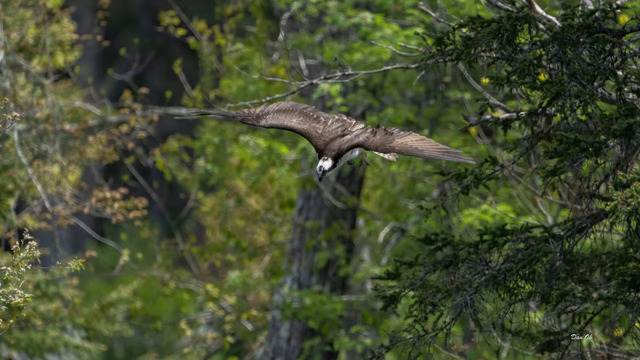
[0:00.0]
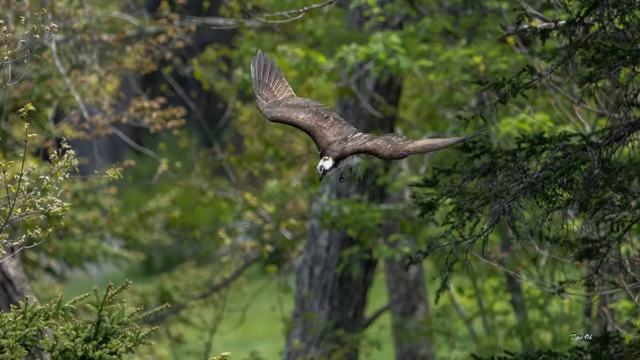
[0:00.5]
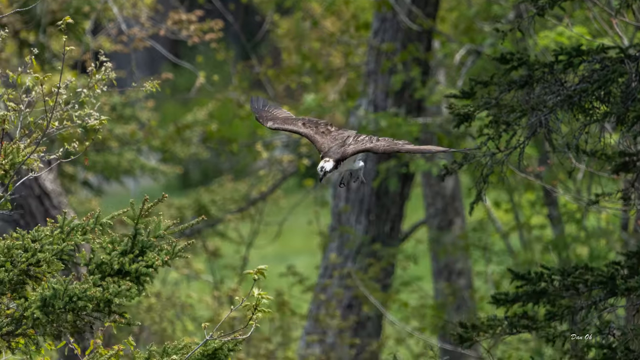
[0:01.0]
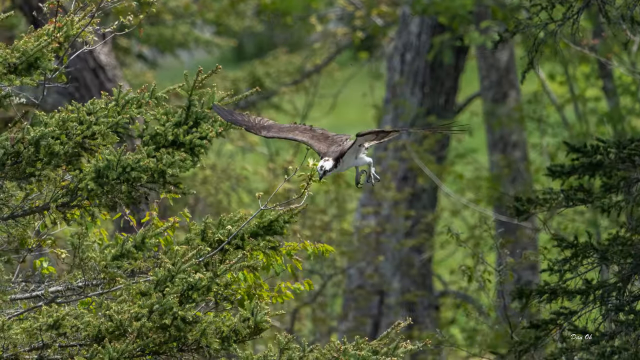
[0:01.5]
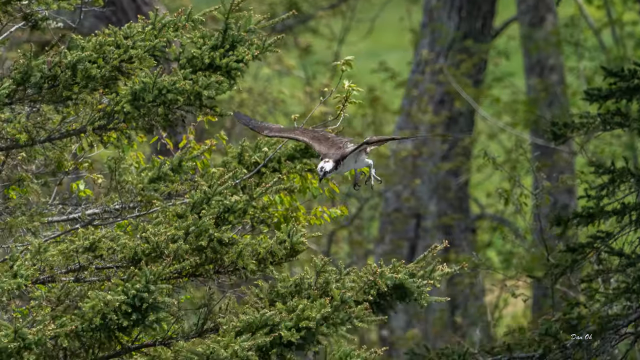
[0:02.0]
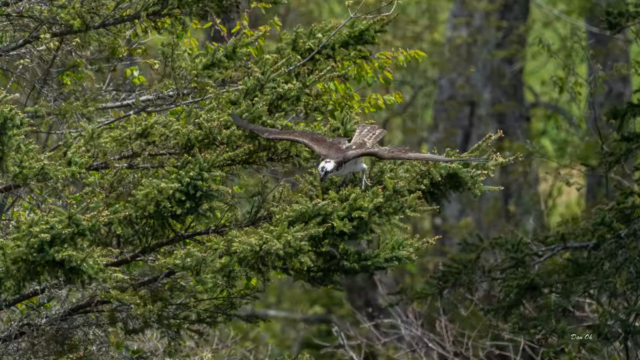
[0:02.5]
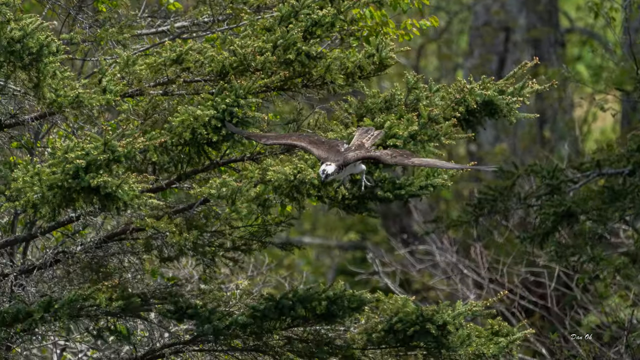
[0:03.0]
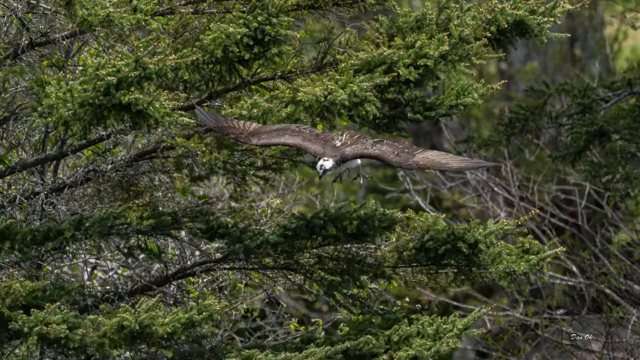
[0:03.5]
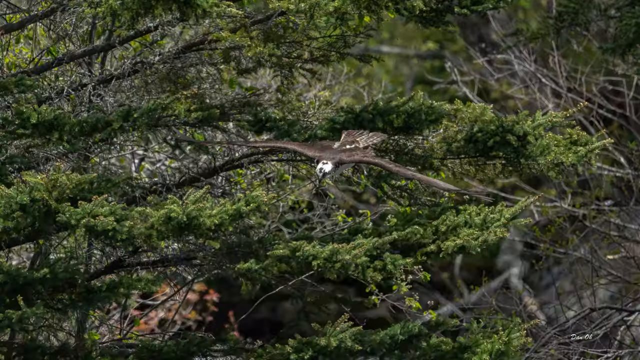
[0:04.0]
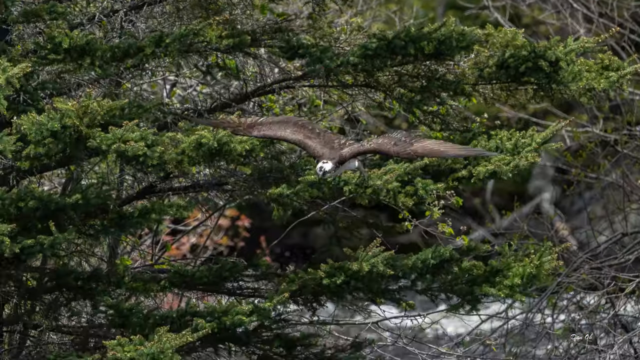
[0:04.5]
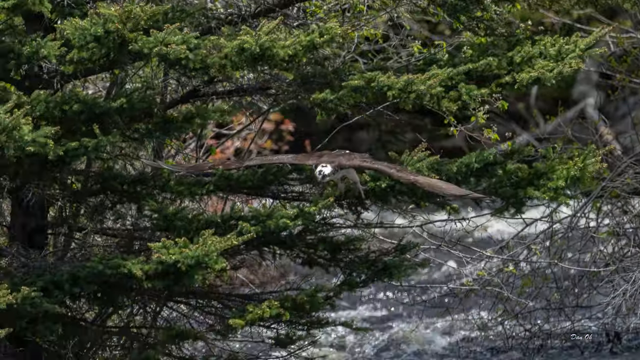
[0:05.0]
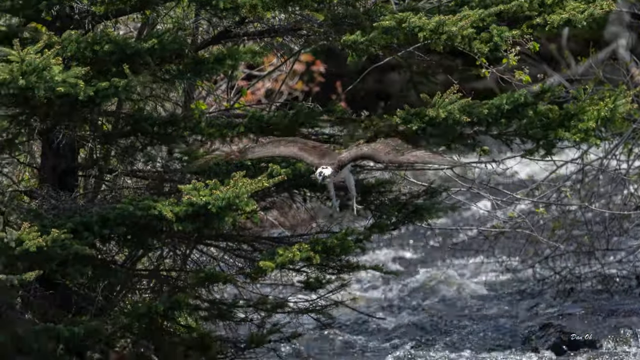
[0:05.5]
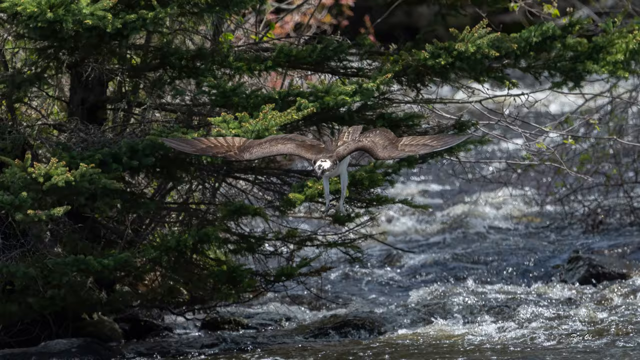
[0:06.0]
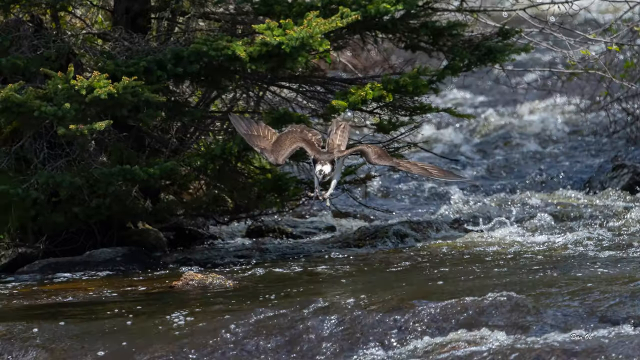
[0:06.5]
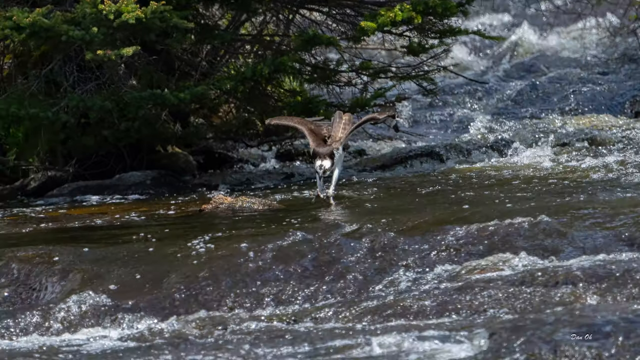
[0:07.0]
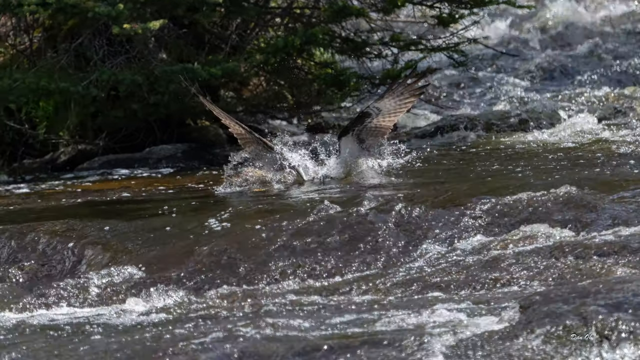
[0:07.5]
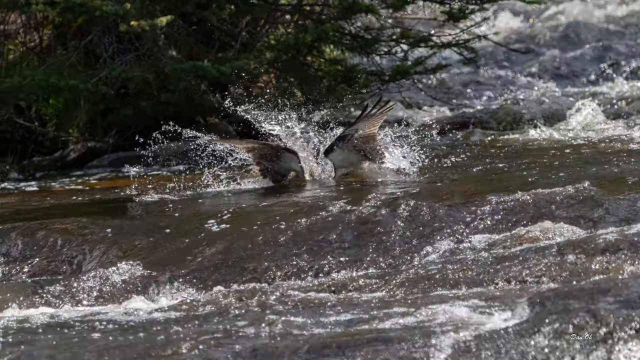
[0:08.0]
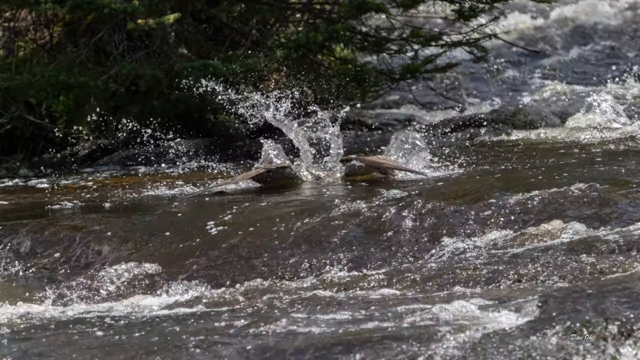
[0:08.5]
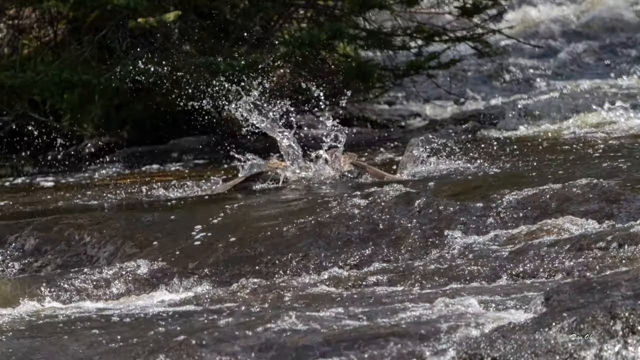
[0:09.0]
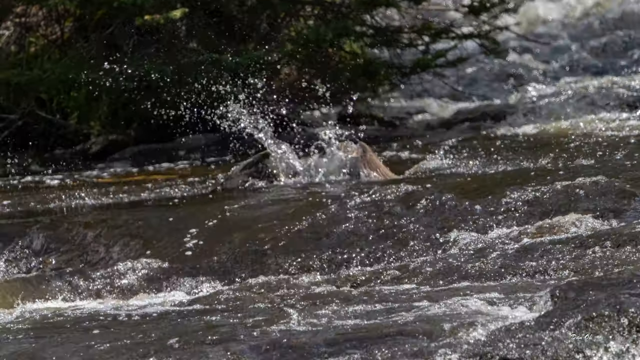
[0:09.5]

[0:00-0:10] An eagle flies downward in a very choppy way because the video has a very low frame rate. Rather than moving smoothly, the eagle looks like it is skipping frames or glitching, moving and then stopping and then moving and stopping again, almost like a PowerPoint.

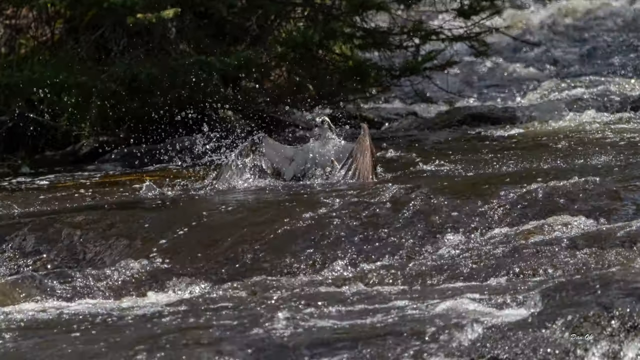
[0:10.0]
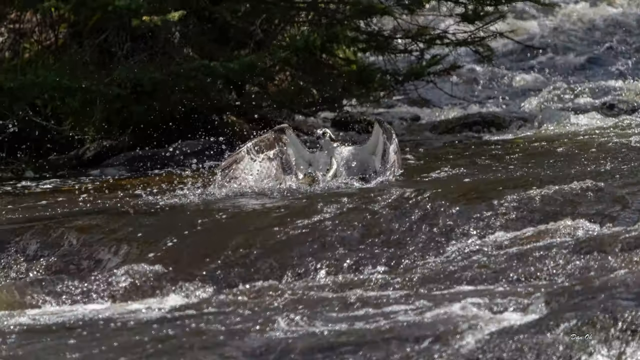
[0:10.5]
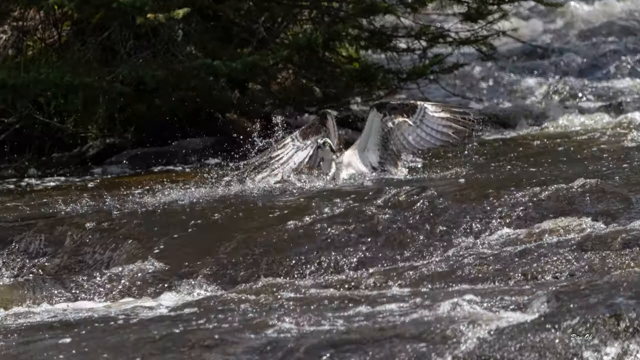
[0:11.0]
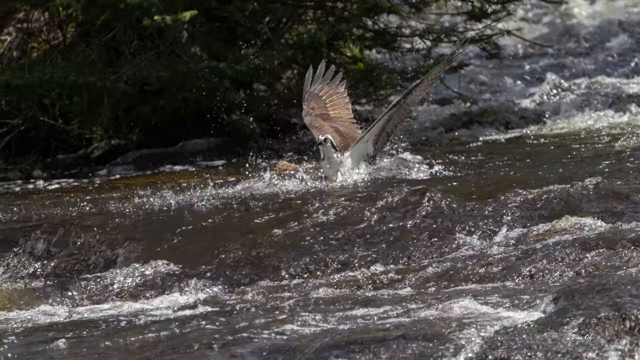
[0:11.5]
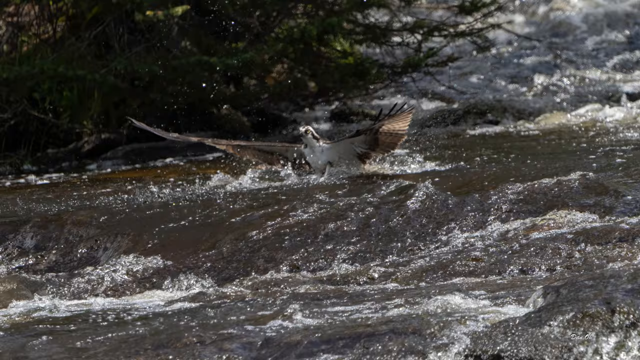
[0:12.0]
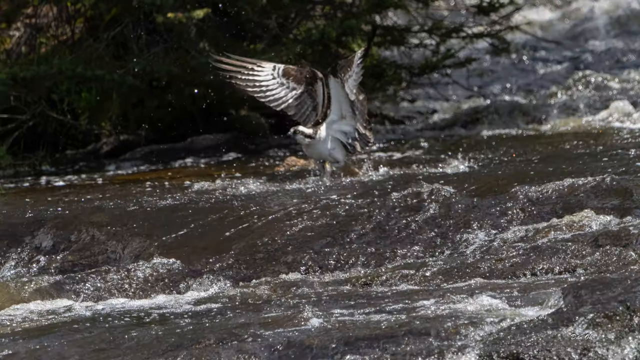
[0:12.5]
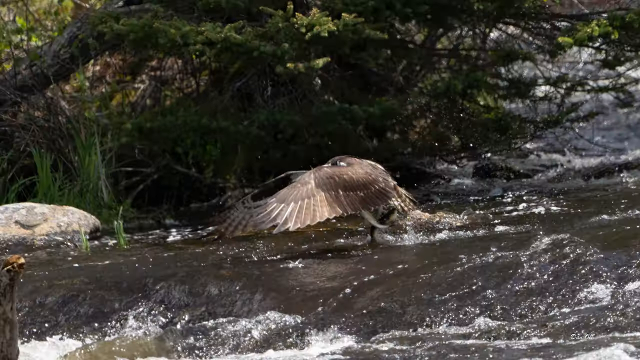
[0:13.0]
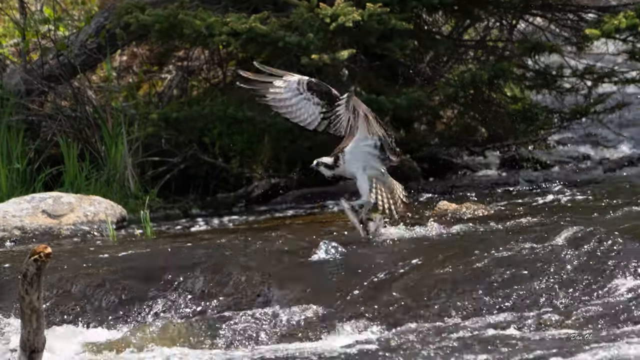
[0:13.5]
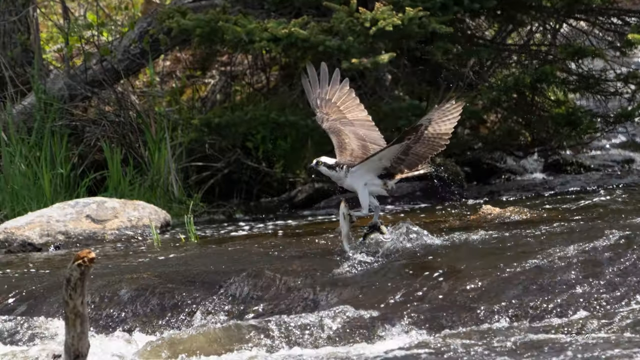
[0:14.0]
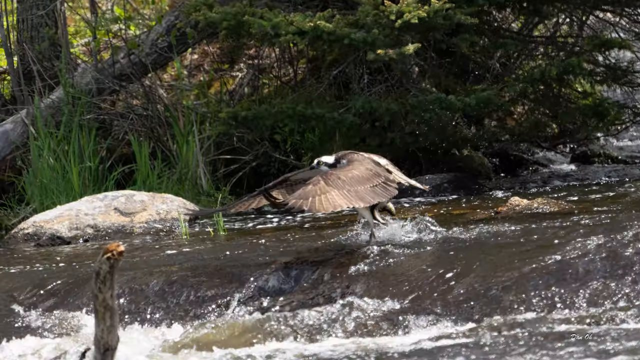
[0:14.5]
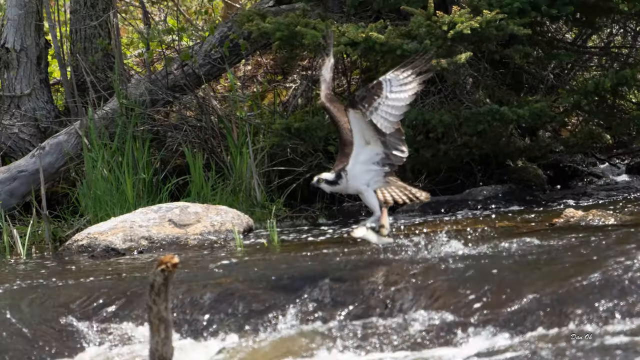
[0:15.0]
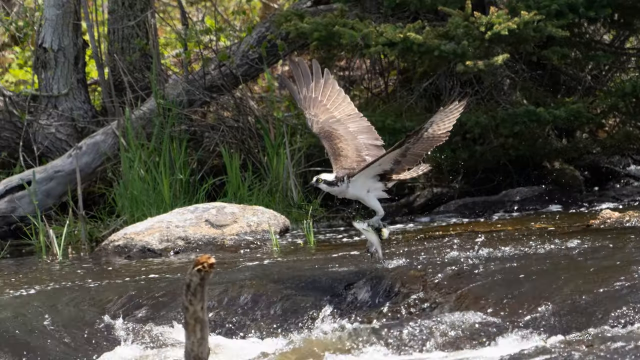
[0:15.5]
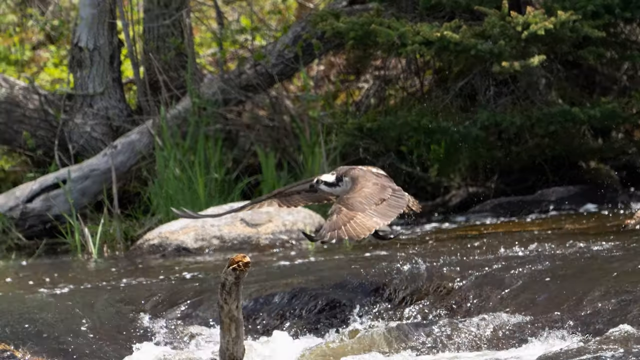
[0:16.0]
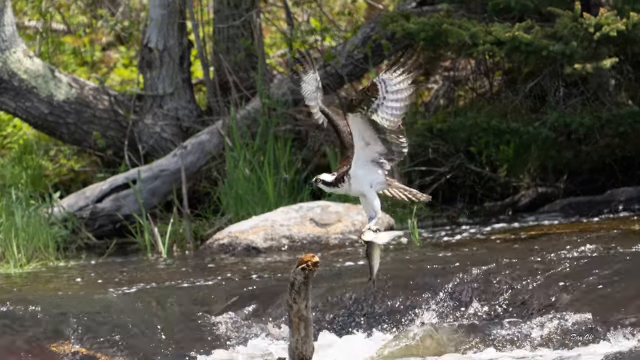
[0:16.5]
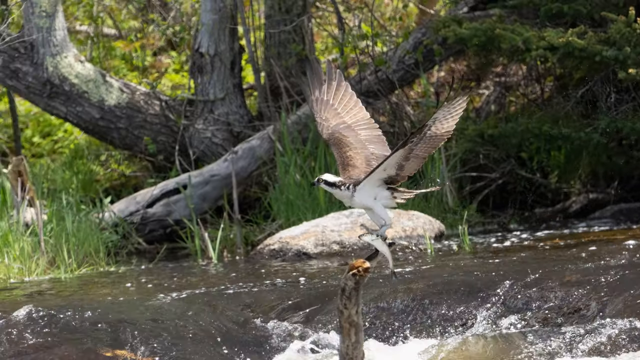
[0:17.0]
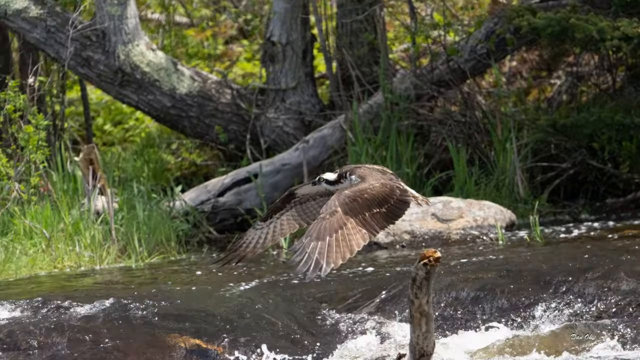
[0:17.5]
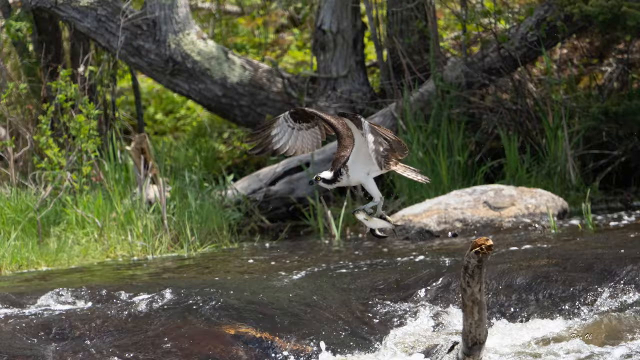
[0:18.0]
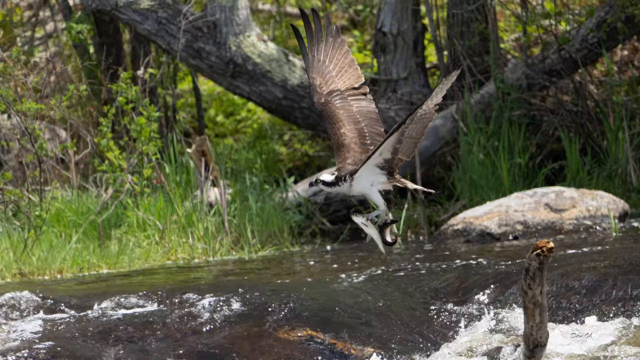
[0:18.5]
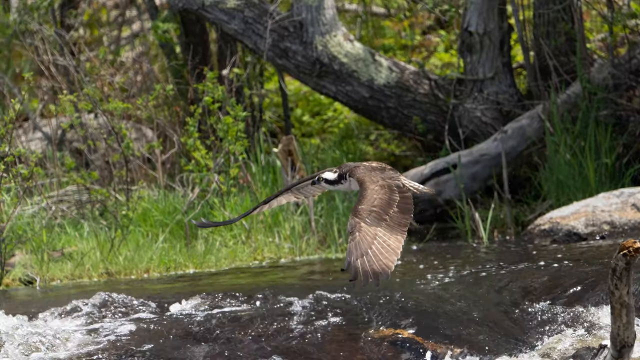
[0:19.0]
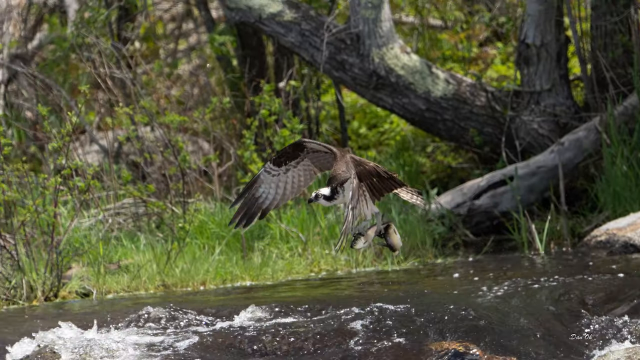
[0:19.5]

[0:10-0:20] The eagle appears to jump into the water to grab a fish. It dips its foot into the water, pops out a little, and flies off with the fish in its talons, kind of flapping away as the camera films it.